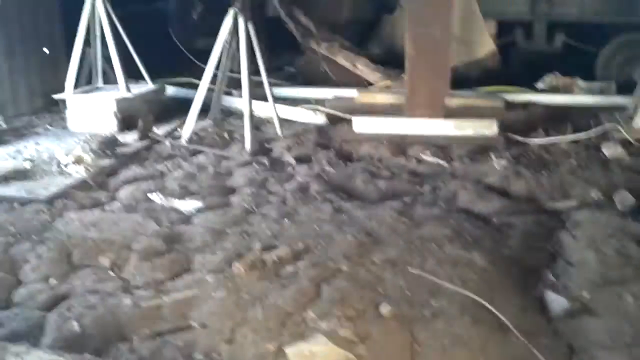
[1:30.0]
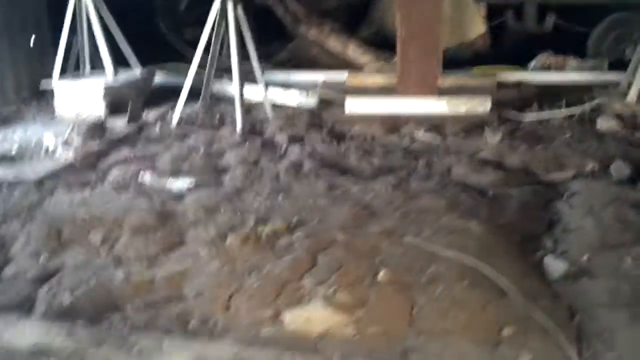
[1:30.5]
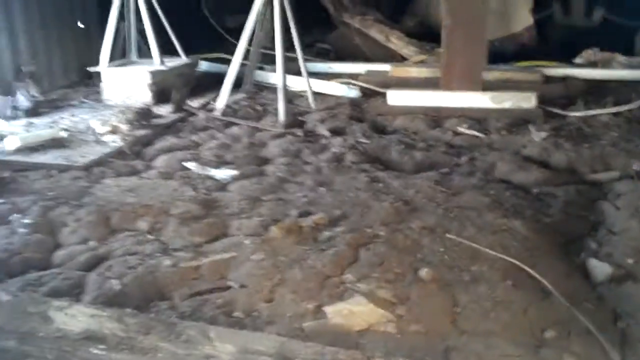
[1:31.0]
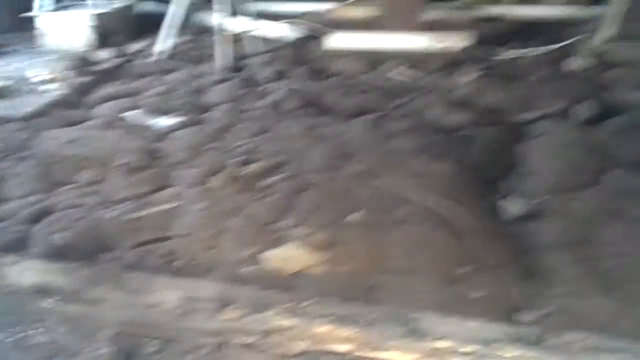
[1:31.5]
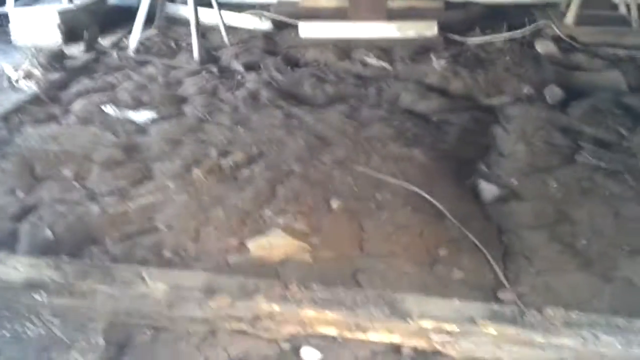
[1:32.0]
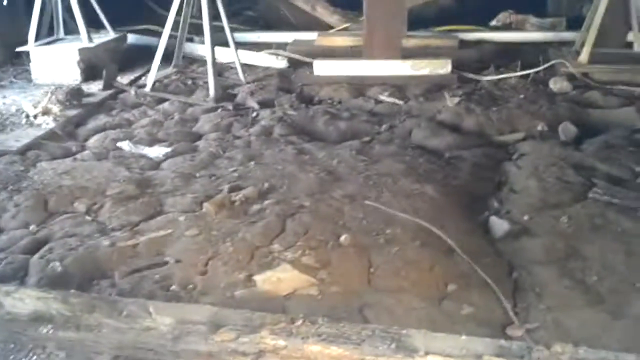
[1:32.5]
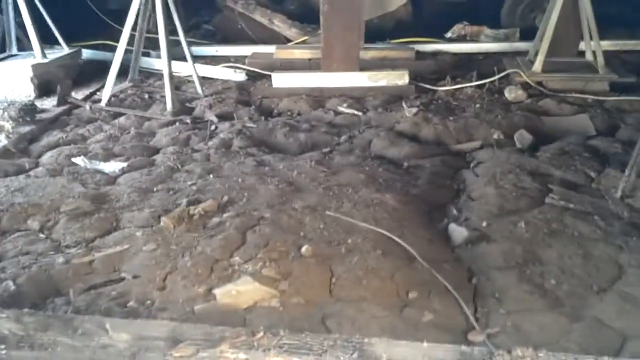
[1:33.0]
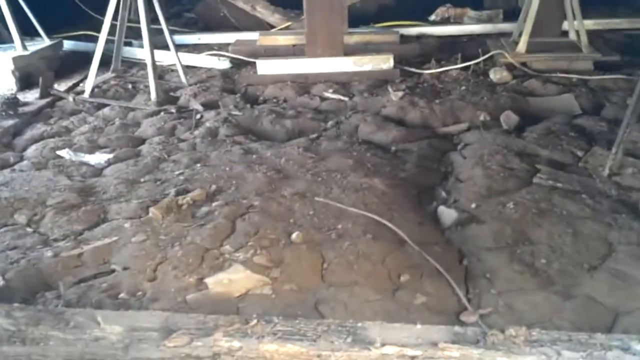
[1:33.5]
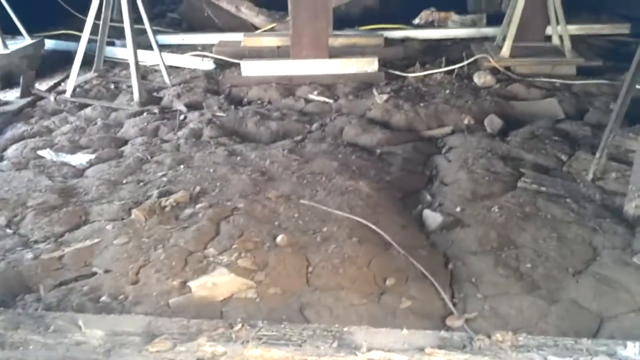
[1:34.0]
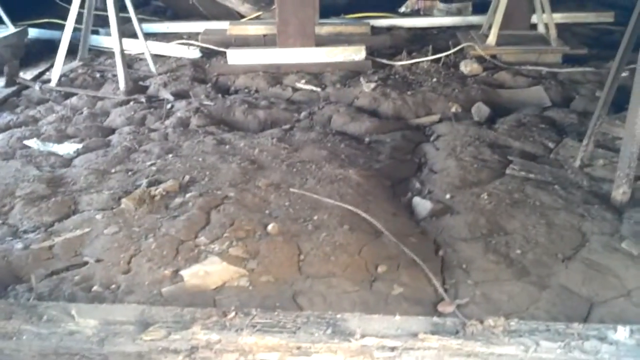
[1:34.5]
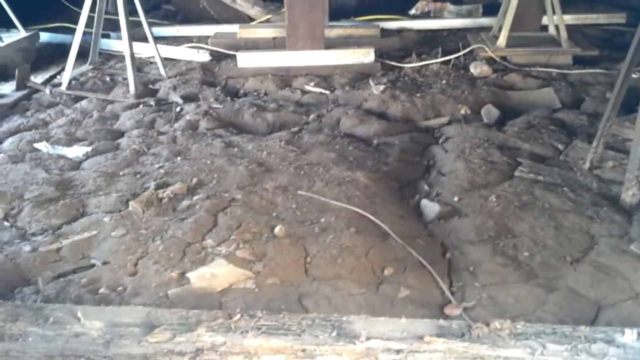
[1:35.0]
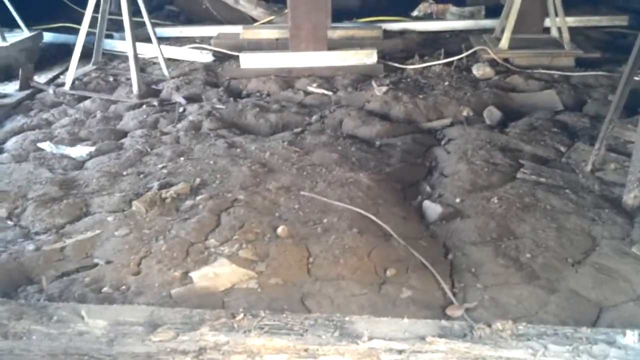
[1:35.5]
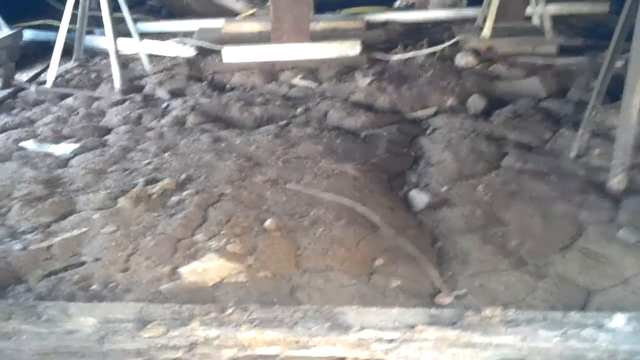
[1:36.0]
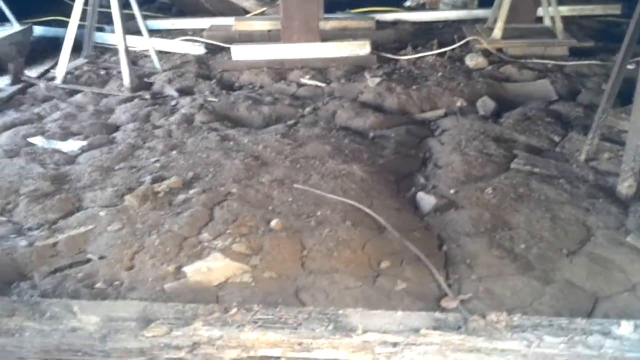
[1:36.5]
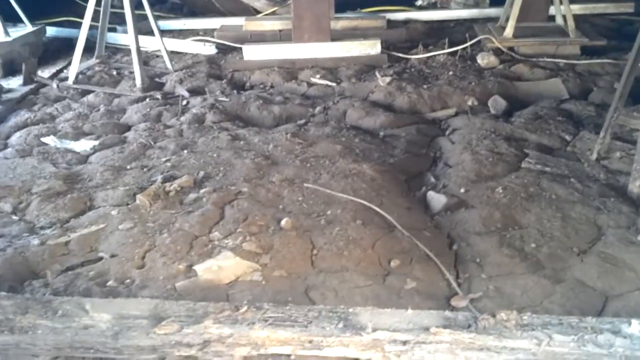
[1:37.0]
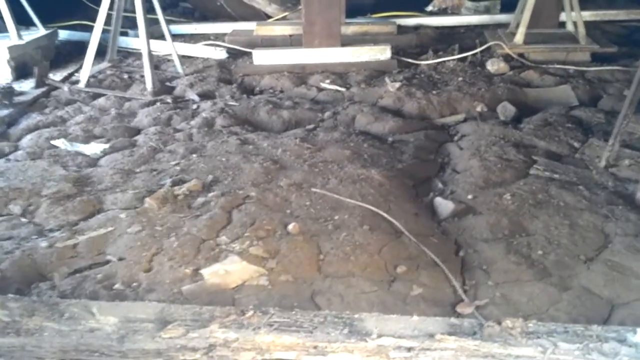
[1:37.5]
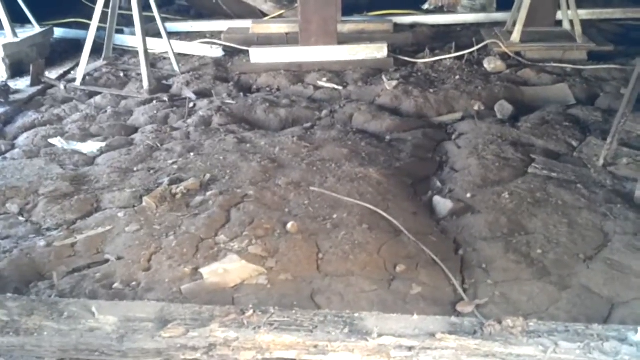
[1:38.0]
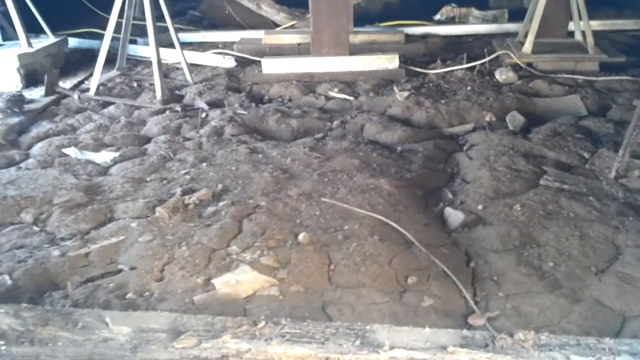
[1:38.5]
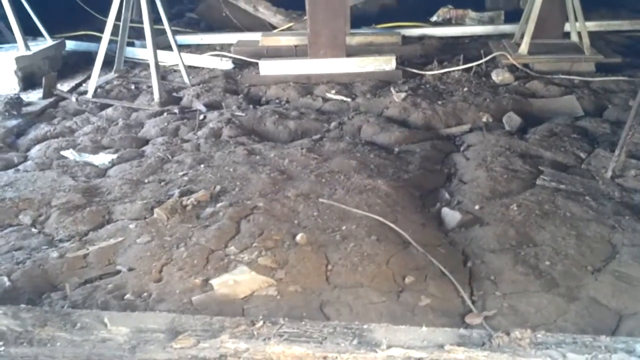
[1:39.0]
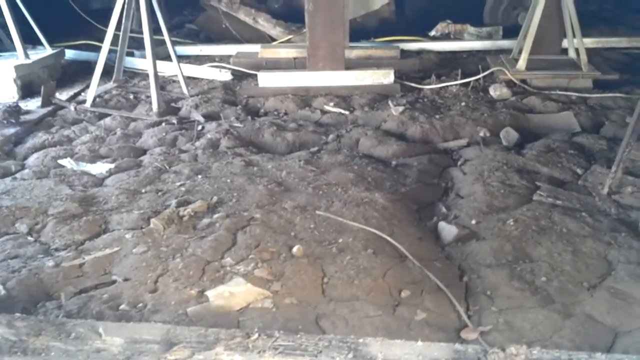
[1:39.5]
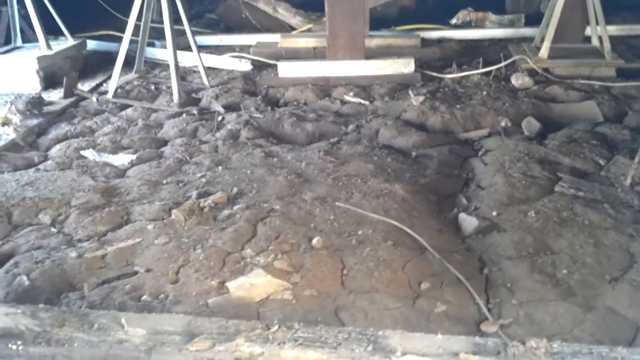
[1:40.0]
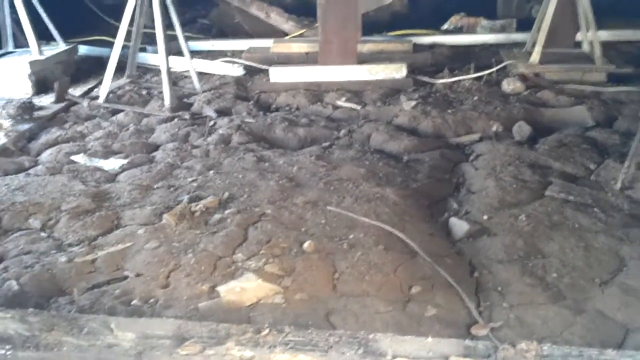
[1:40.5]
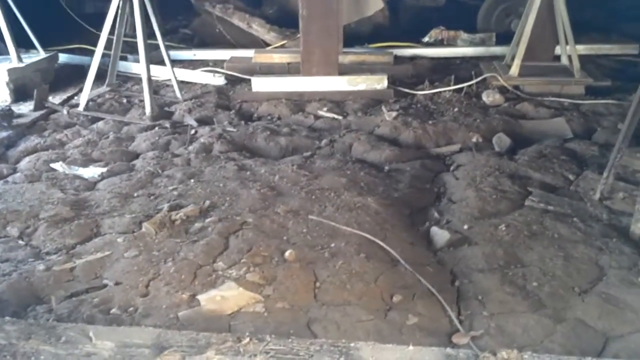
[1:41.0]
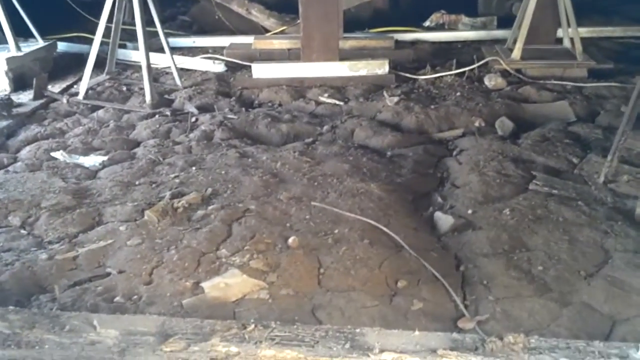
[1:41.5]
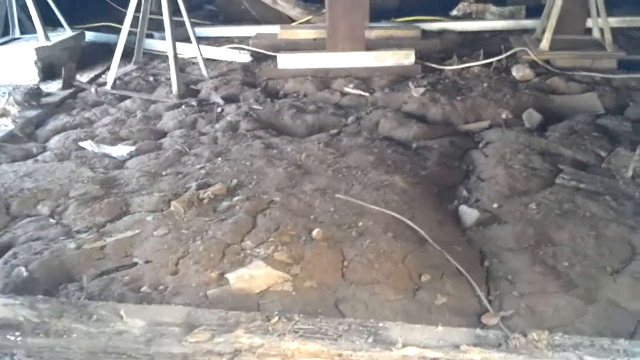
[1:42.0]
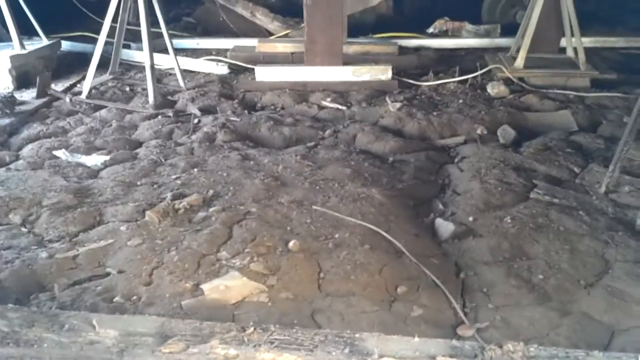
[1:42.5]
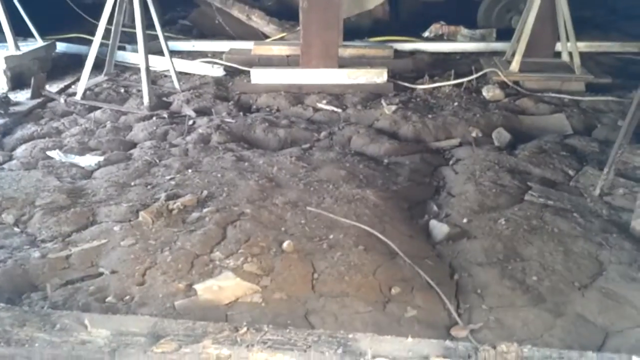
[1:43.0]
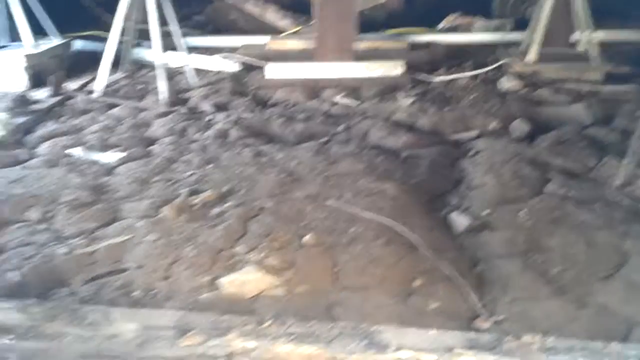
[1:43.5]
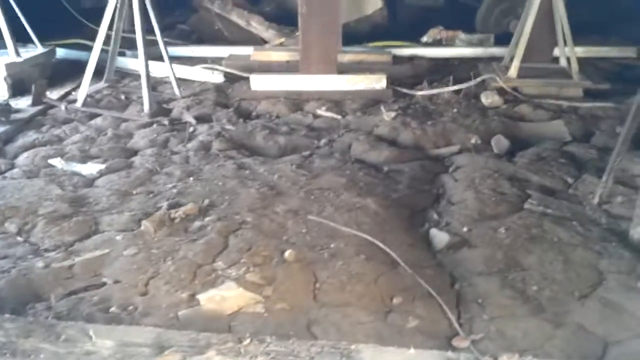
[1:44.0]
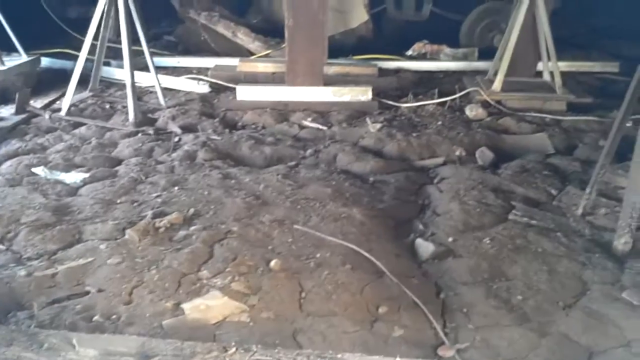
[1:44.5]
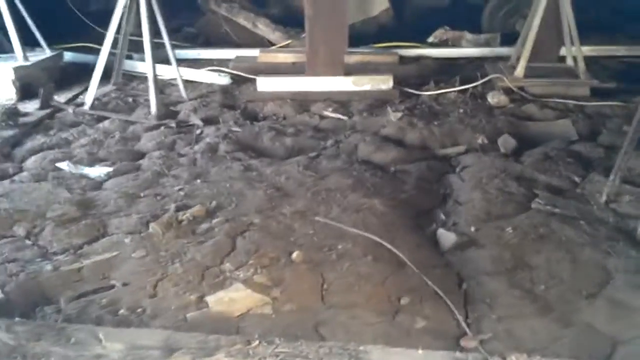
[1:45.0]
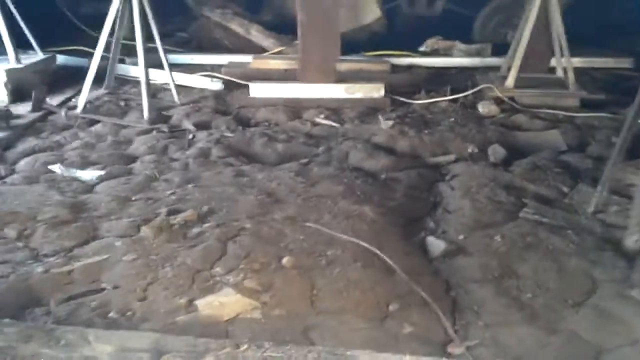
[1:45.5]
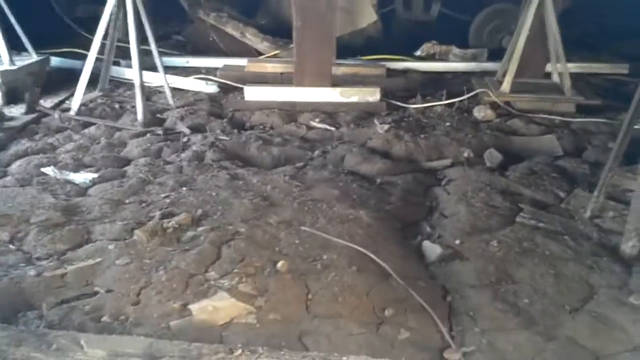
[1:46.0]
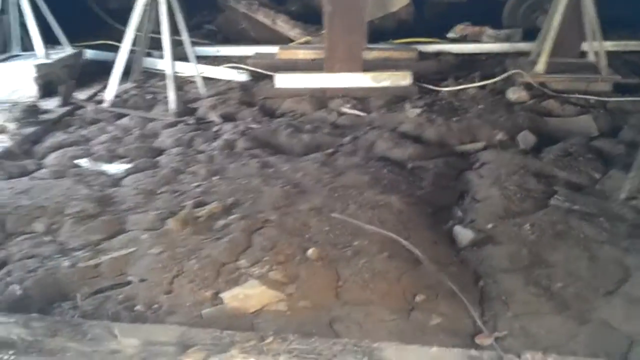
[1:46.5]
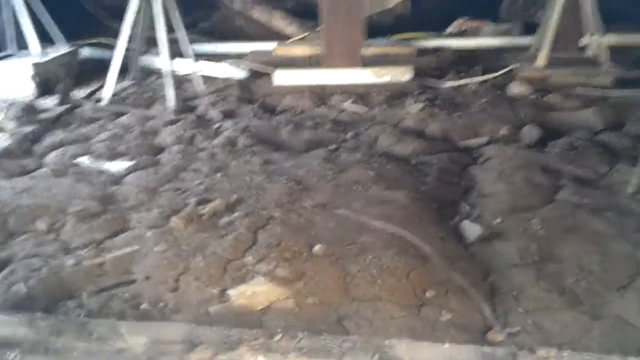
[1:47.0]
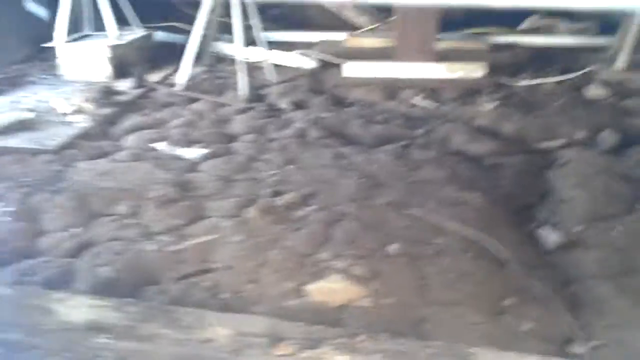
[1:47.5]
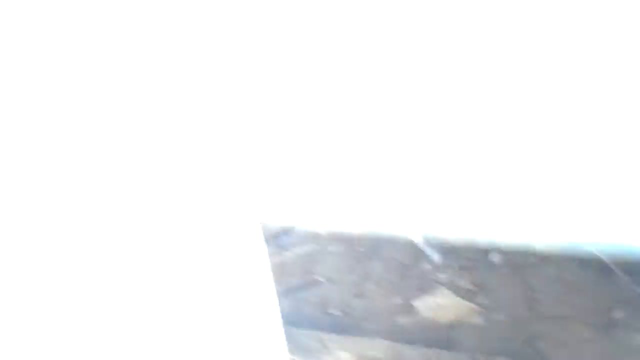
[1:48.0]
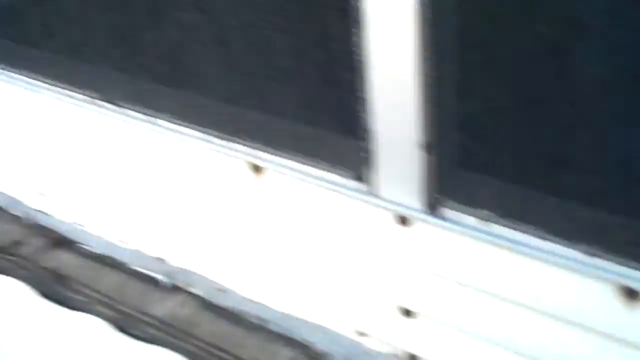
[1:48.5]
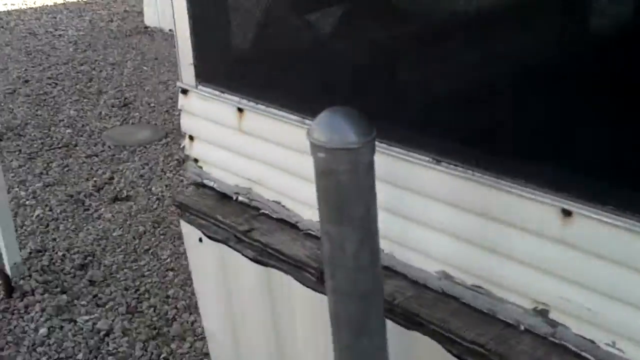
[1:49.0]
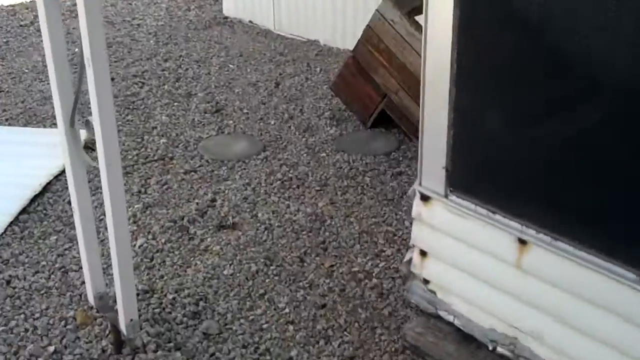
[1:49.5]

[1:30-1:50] The shaky footage continues on the dirt floor of the second area of the crawl space, through the second opening. At the very end, the camera comes out of the crawl space and the image almost goes all white, possibly due to the change in lighting from inside to outside. The camera then focuses on the asphalt again, possibly walking to another section. The white siding of the home is visible, along with what looks like a wood crate but is actually three wood steps built into a block, overturned on the asphalt. A couple of round pavers are right next to it, possibly leading somewhere else. A white railing is to the left, and about a third of a corner of the discarded crawl space covering is visible. The camera appears to be heading back toward the rear of the home.